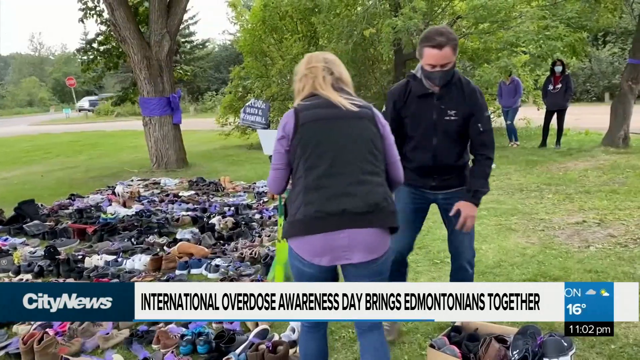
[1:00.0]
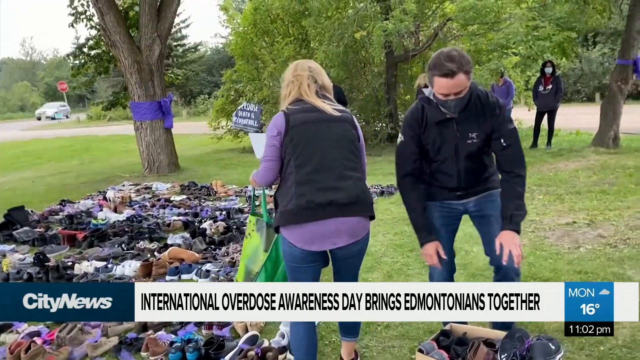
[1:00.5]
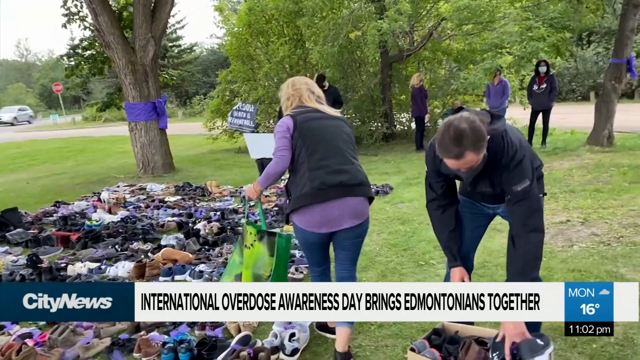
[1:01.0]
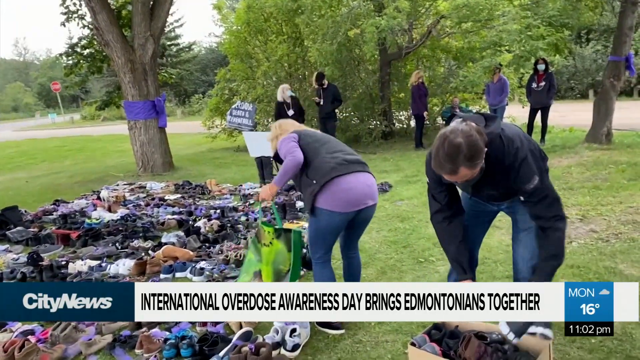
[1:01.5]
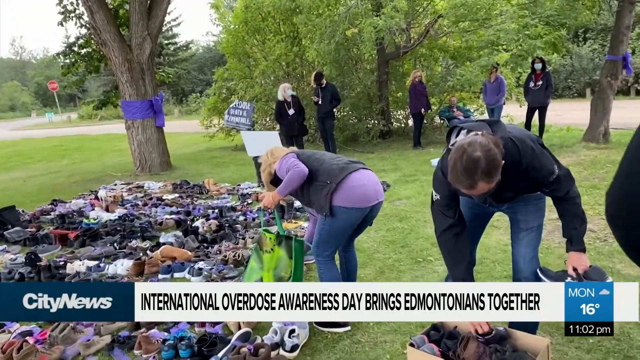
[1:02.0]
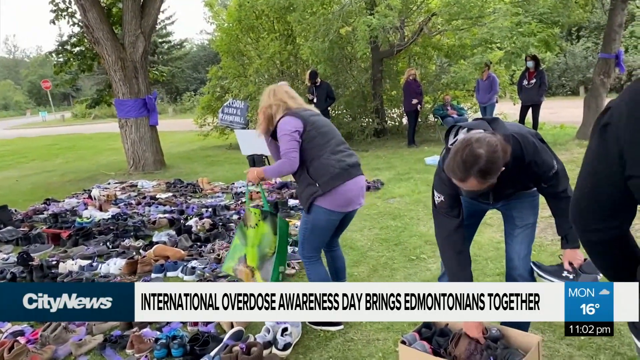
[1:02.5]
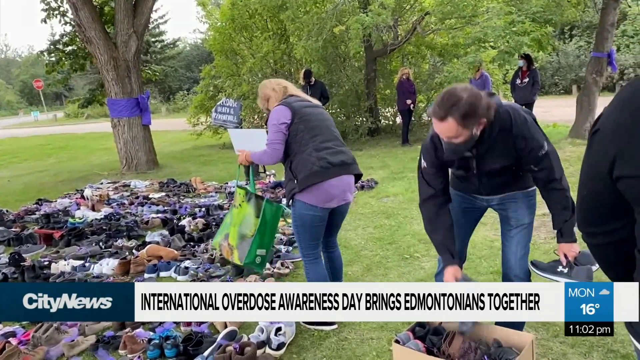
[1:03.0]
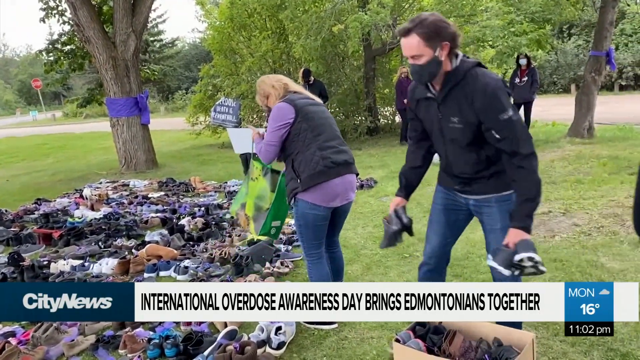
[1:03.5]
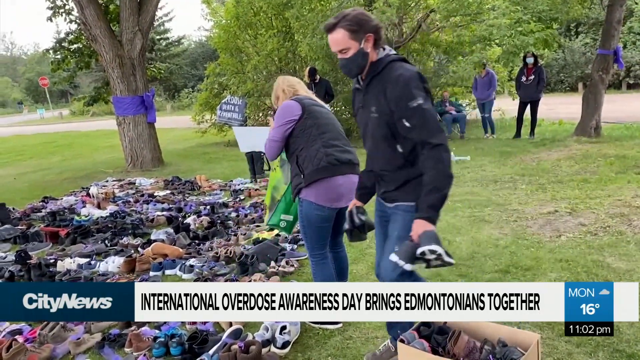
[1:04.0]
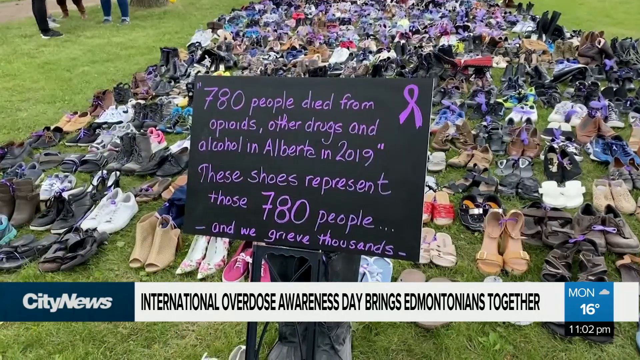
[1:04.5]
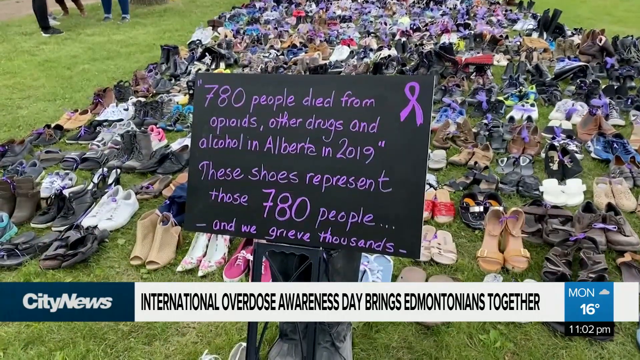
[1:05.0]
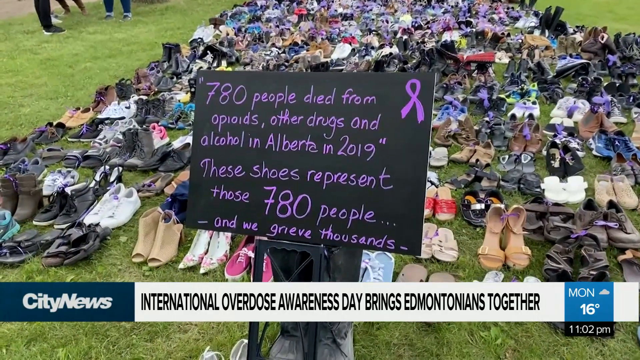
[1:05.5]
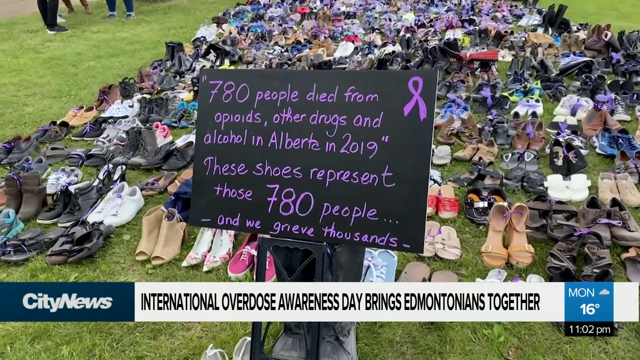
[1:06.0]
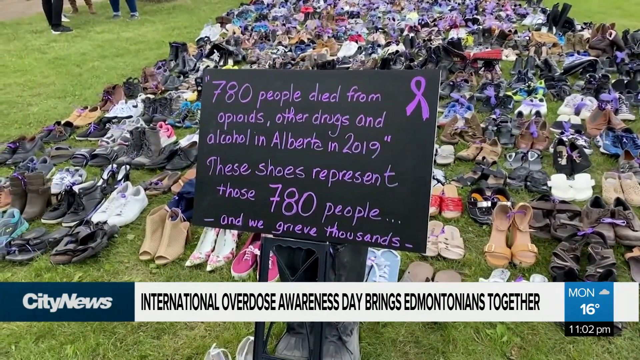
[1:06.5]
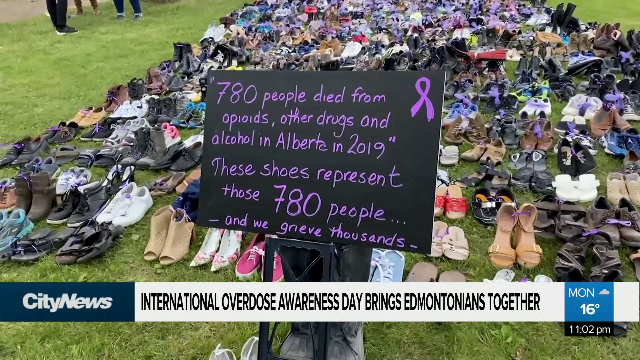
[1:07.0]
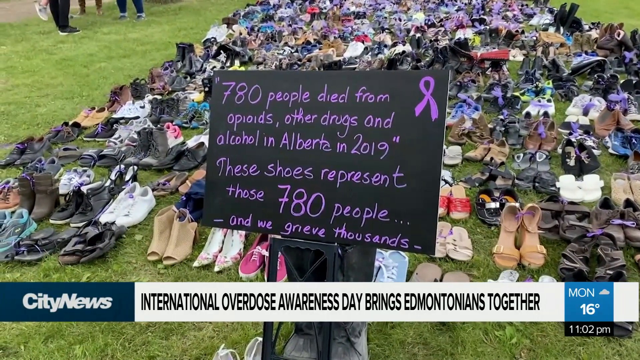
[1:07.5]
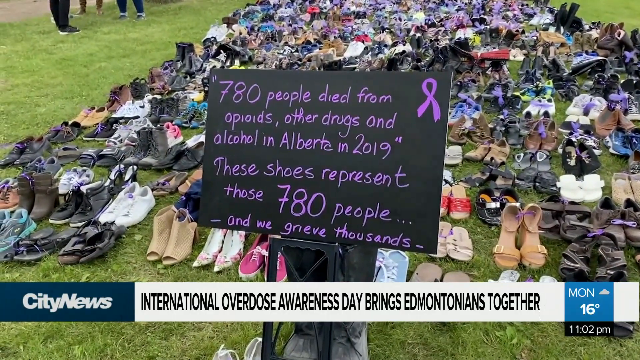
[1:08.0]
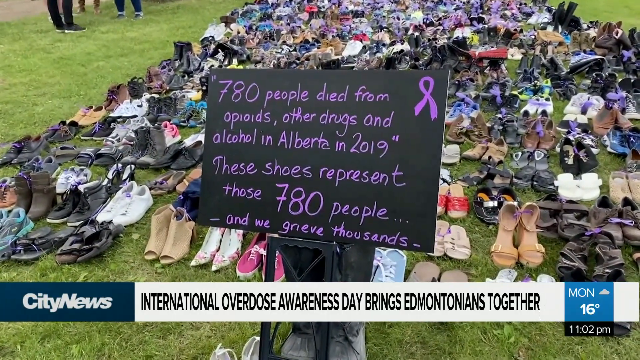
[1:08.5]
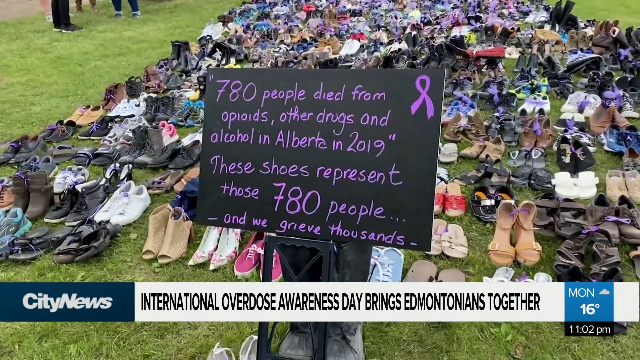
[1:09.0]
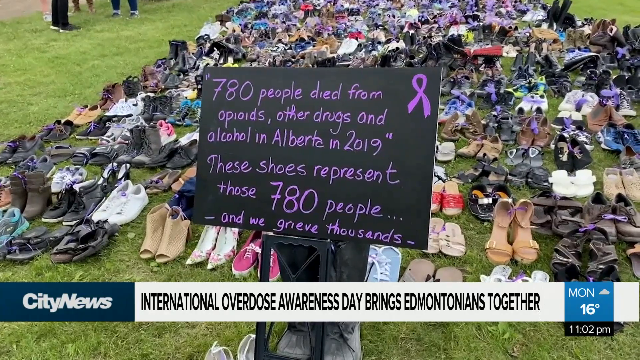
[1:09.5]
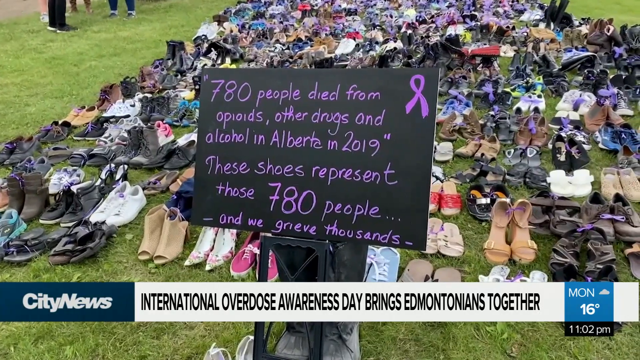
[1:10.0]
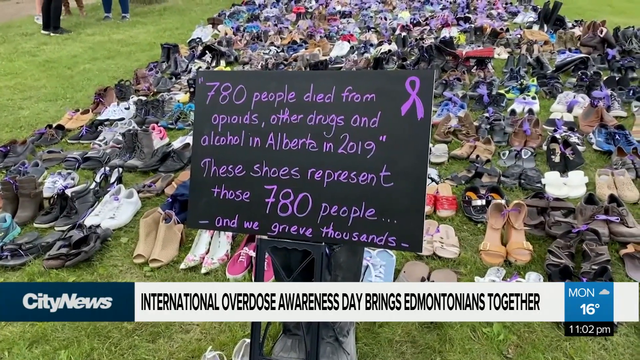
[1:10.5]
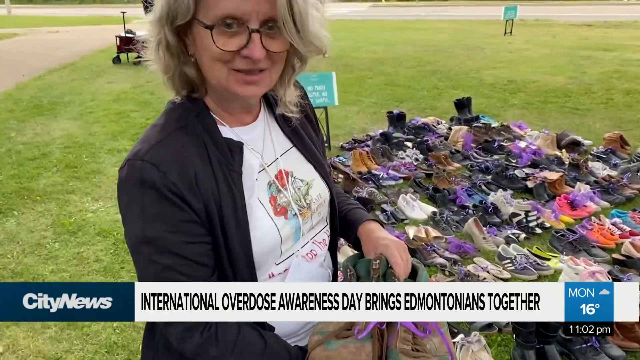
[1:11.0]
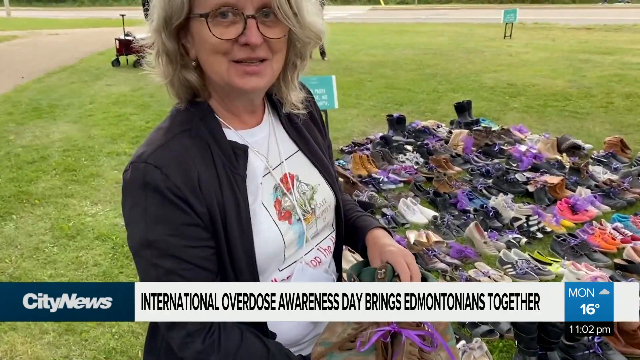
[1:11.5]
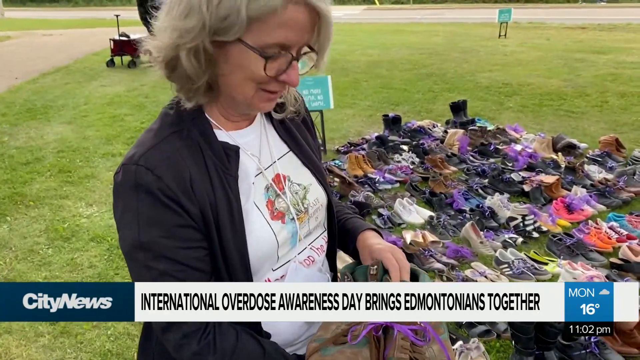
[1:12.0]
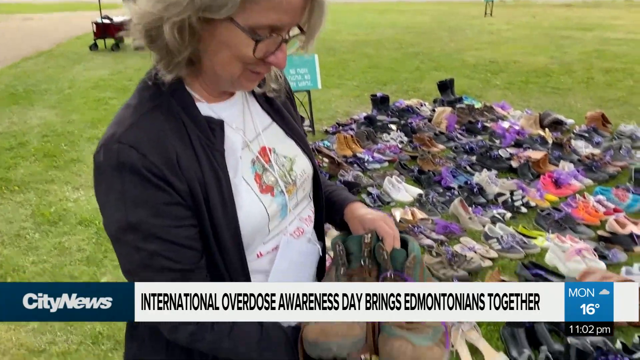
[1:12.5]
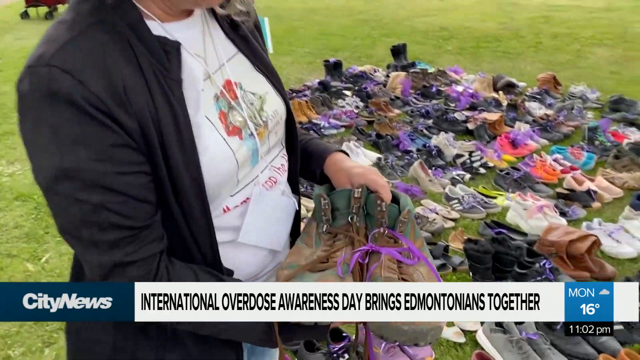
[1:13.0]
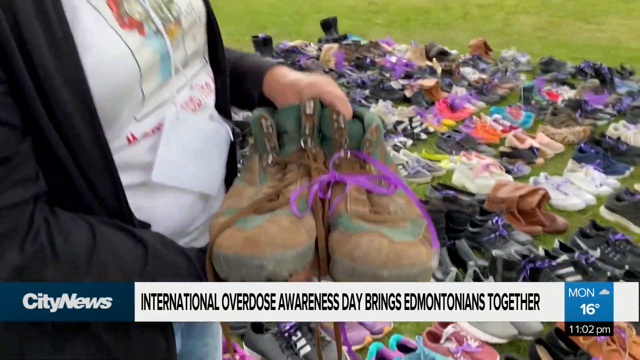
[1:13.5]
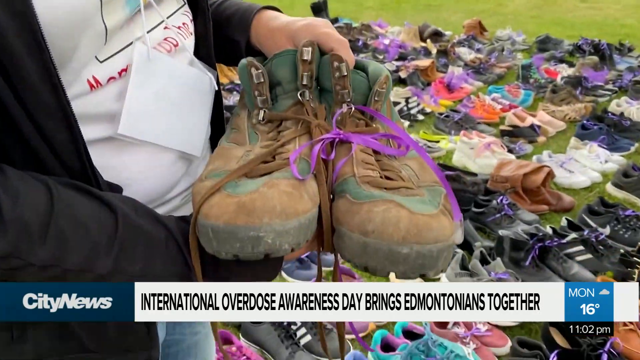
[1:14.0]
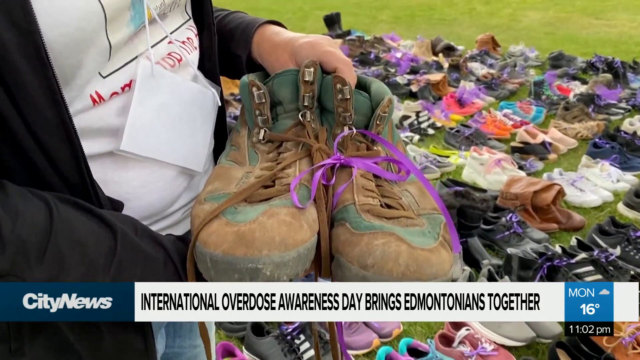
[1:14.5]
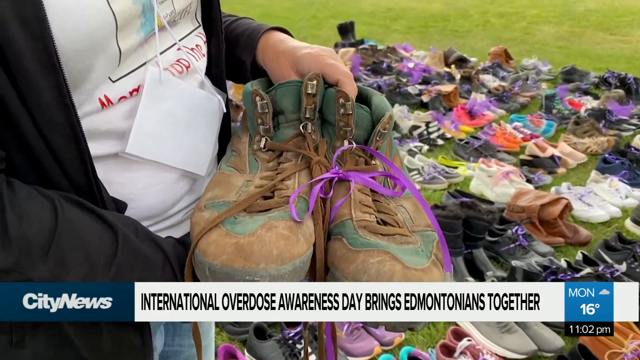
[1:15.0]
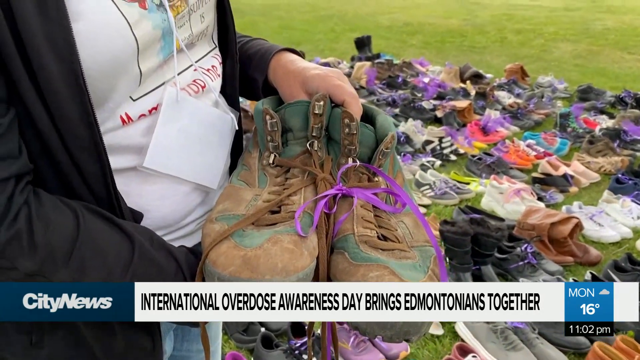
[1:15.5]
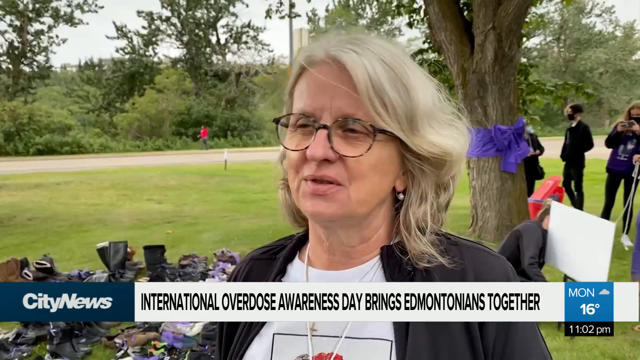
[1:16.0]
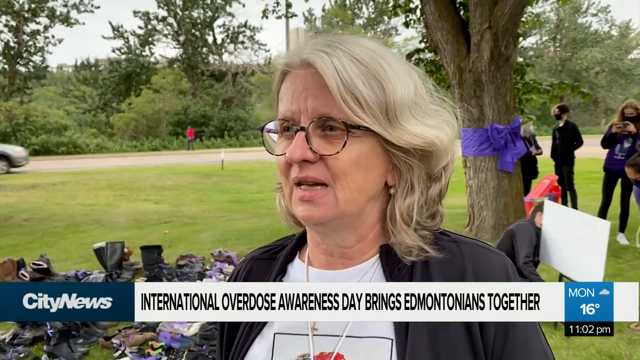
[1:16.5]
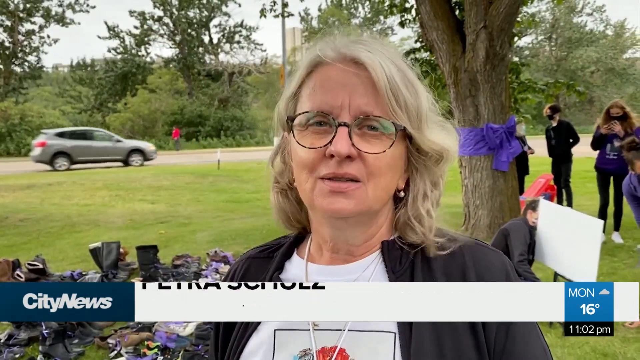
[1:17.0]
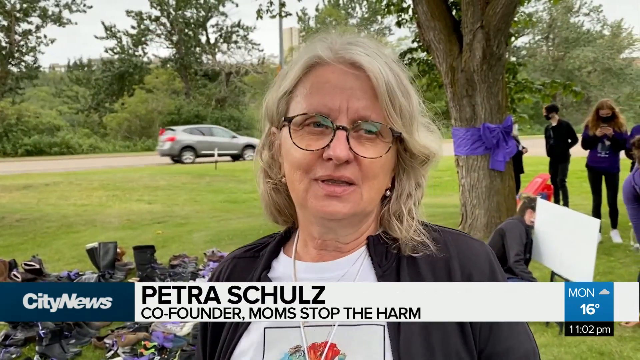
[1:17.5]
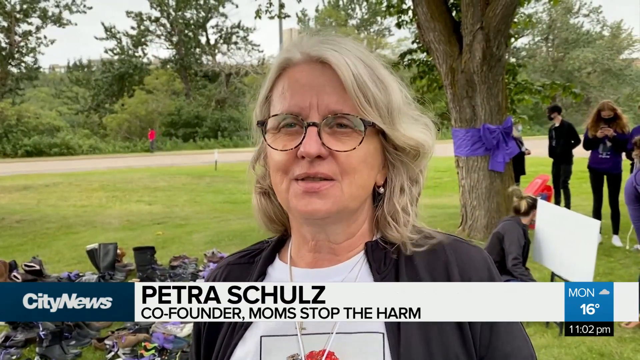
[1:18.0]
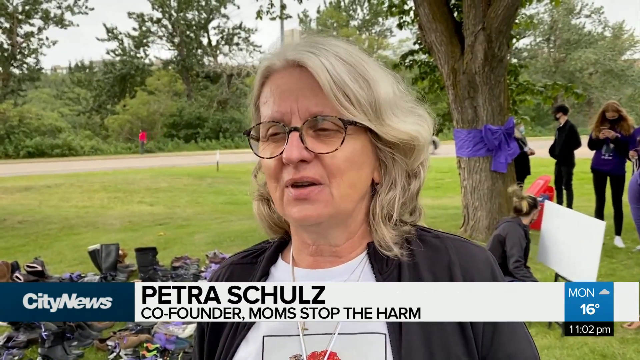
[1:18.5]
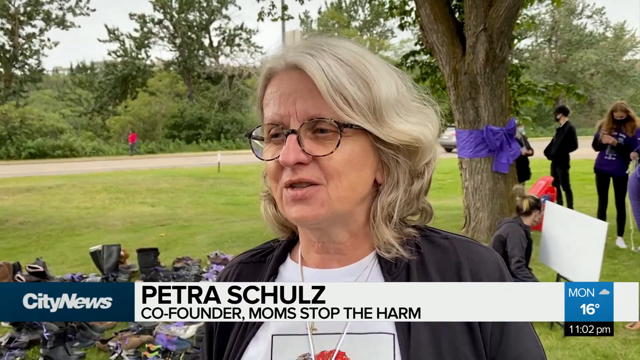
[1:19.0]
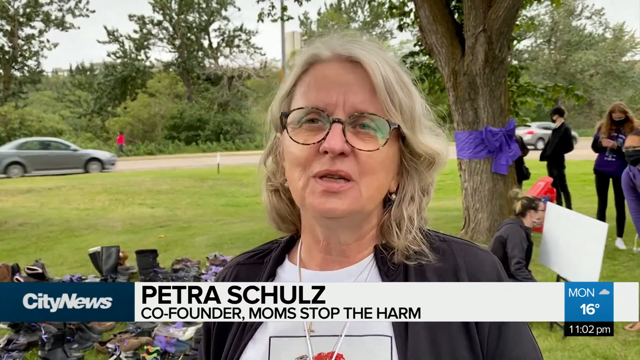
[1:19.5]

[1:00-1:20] A woman in a jacket and a pink t-shirt, carrying a green handbag, moves towards a collection of shoes placed on the ground. A man in a black jacket and jeans, wearing a mask, picks up some shoes and moves towards where the shoes are collected. Among the shoes is a blackboard with writing that says "780 people died from opioids, other drugs and alcohol in Alberta in 2019." Several shoes are seen, most of them purple. A woman is shown holding some shoes fitted with purple laces; the shoe she shows has brown laces, with an additional purple lace added. The woman talking is the co-founder of Moms Stop the Harm. Most of the shoes on the ground have purple color or purple laces.